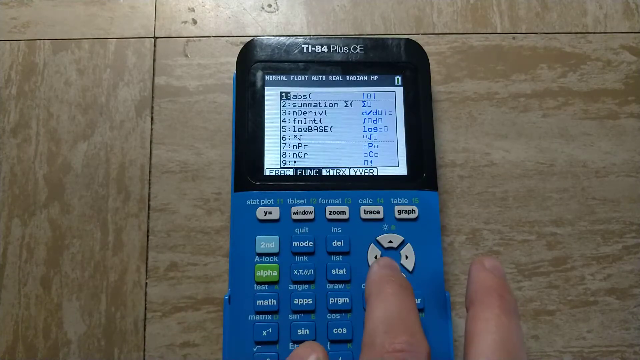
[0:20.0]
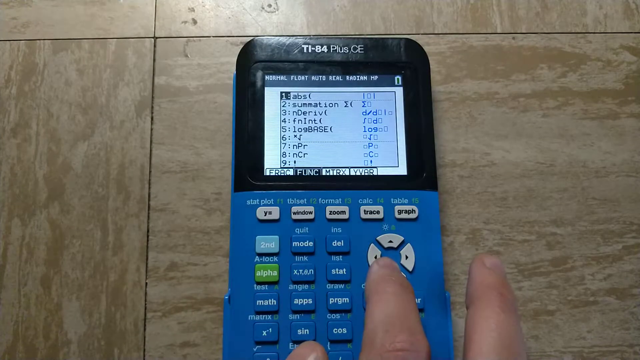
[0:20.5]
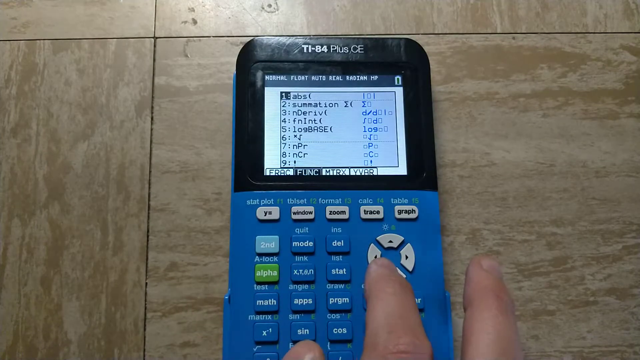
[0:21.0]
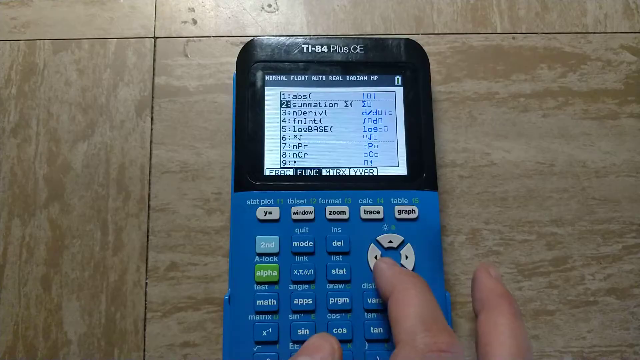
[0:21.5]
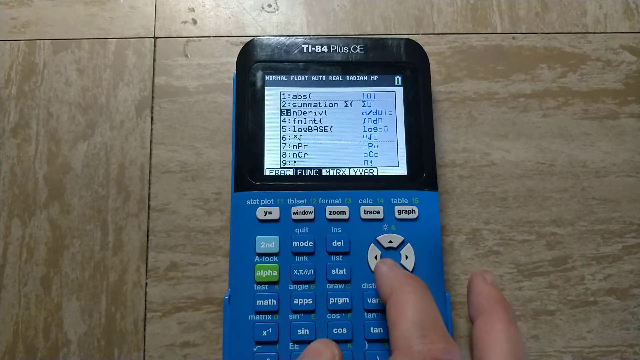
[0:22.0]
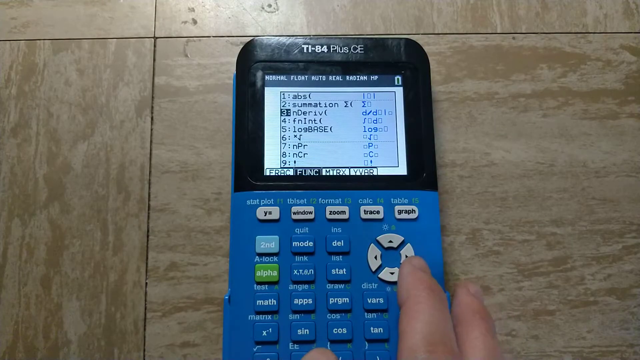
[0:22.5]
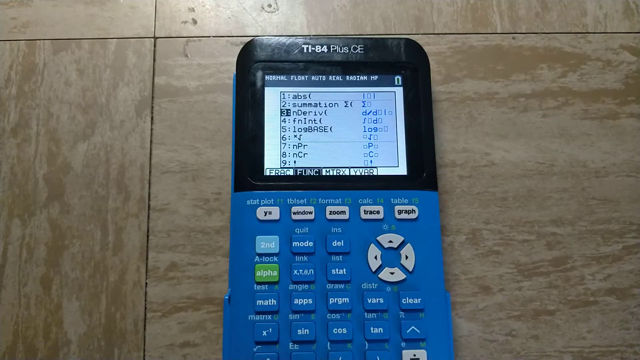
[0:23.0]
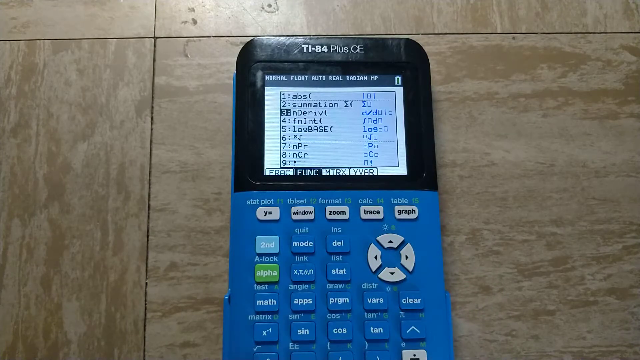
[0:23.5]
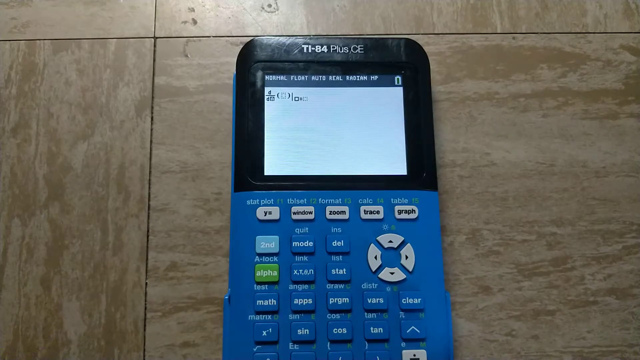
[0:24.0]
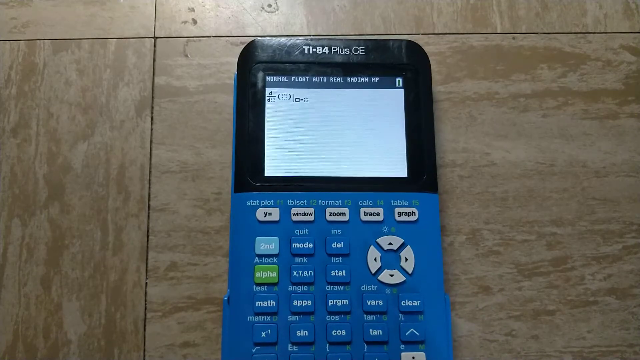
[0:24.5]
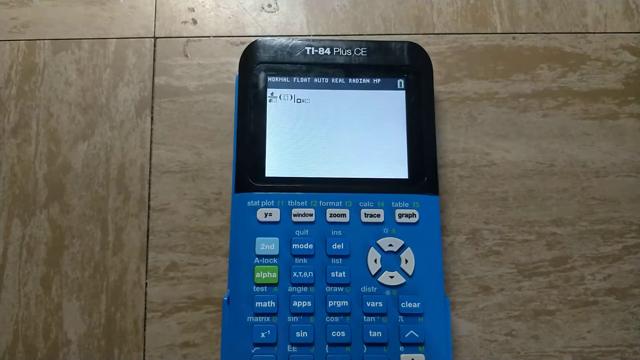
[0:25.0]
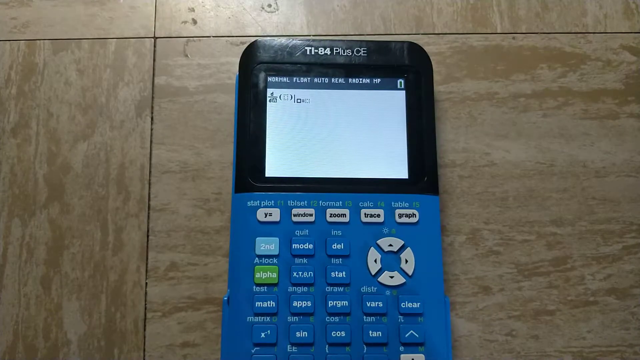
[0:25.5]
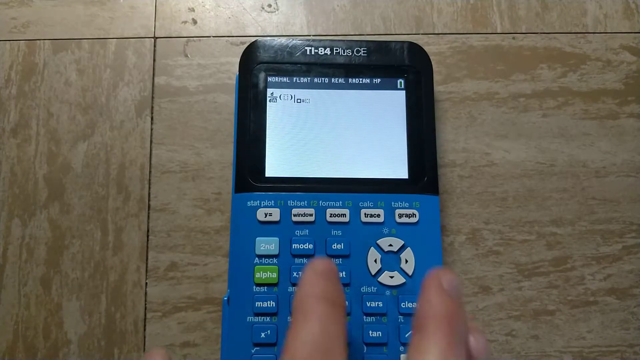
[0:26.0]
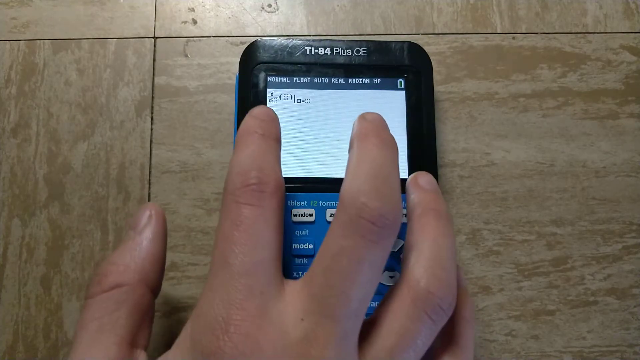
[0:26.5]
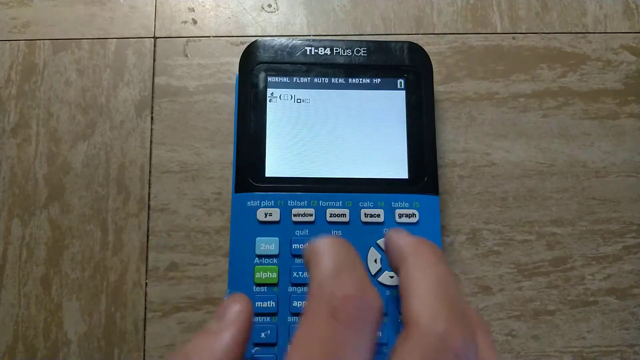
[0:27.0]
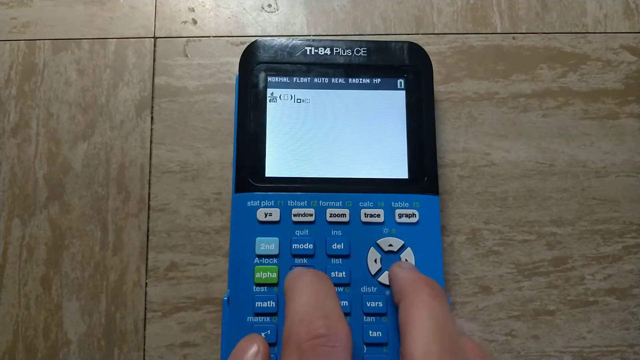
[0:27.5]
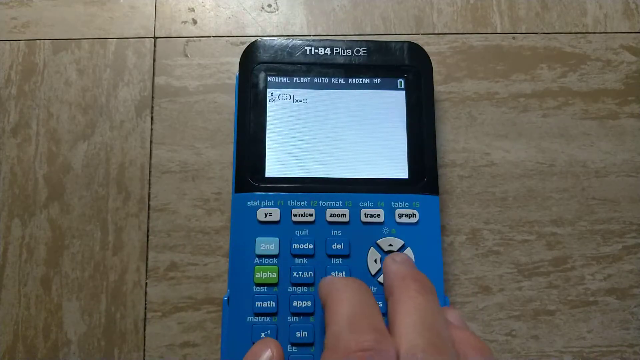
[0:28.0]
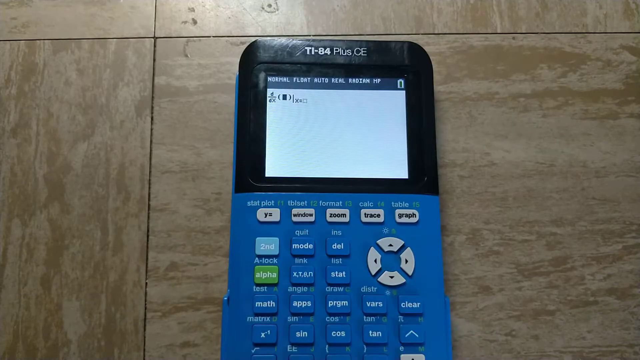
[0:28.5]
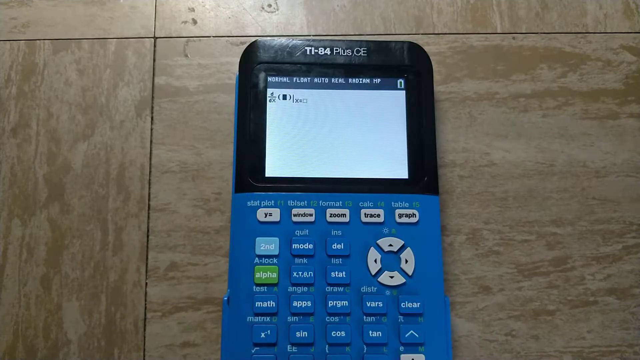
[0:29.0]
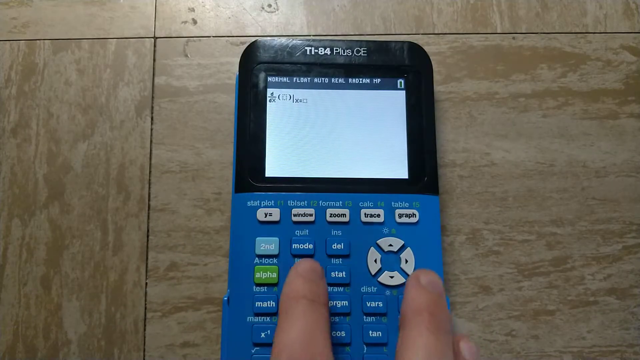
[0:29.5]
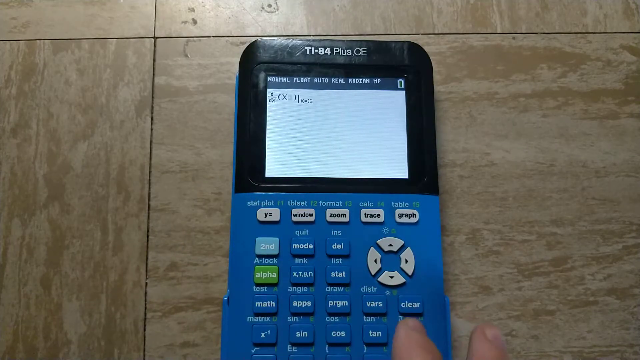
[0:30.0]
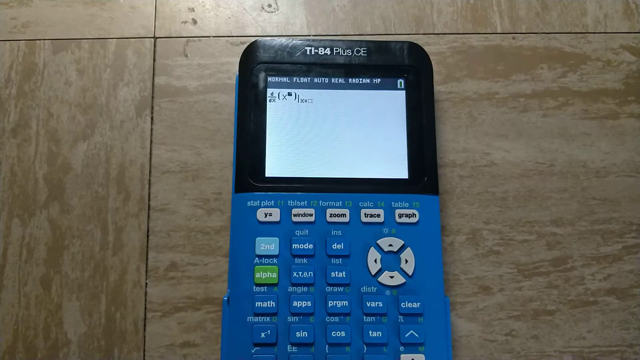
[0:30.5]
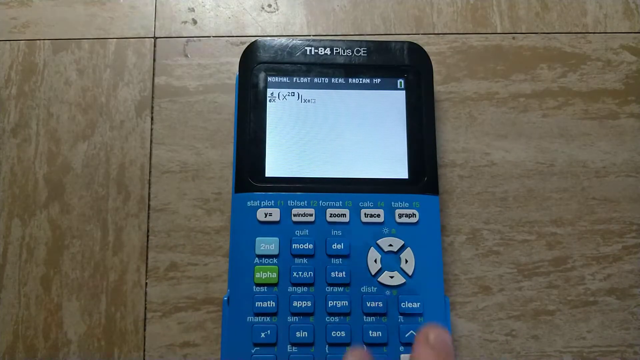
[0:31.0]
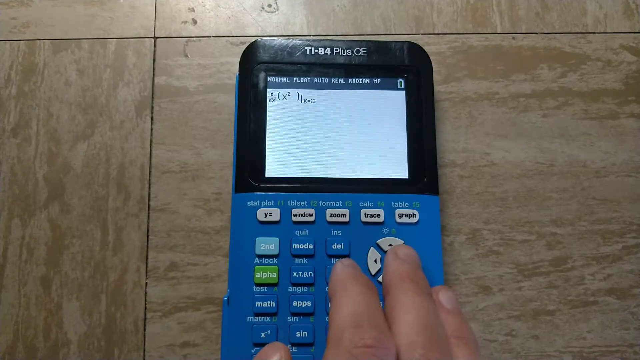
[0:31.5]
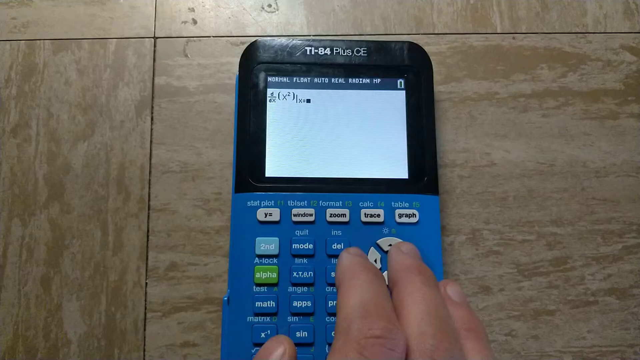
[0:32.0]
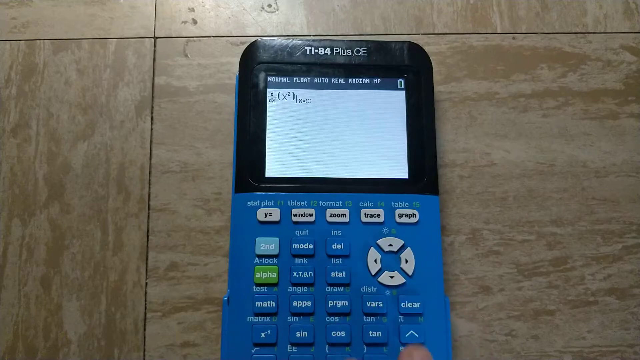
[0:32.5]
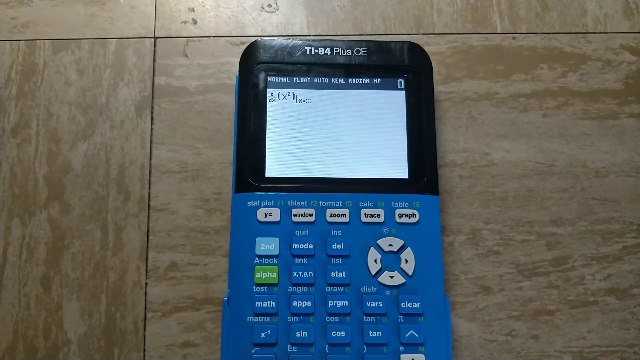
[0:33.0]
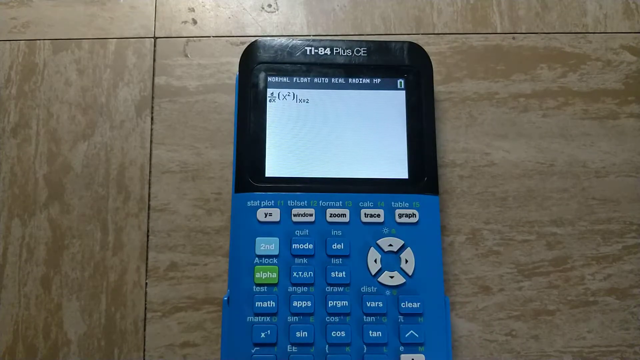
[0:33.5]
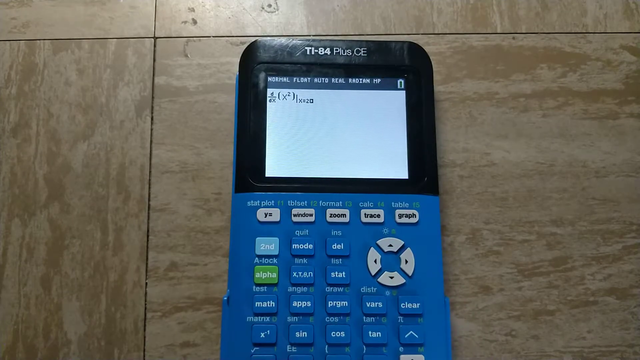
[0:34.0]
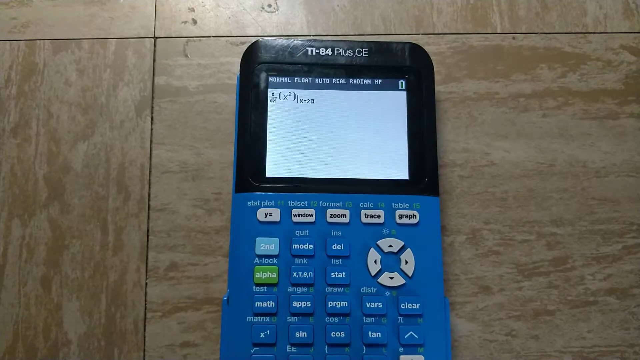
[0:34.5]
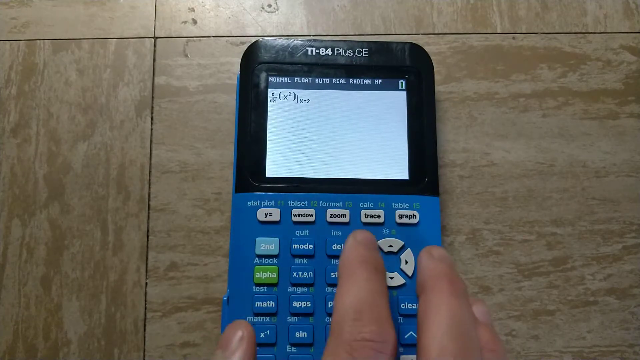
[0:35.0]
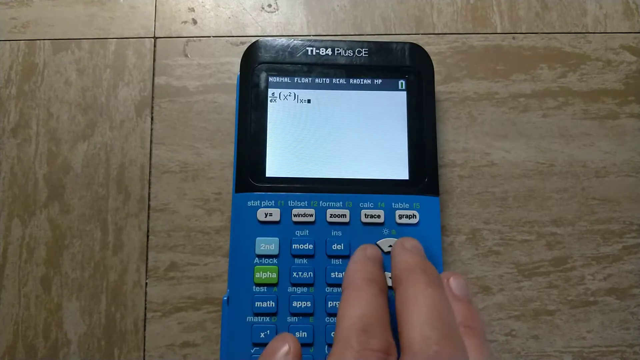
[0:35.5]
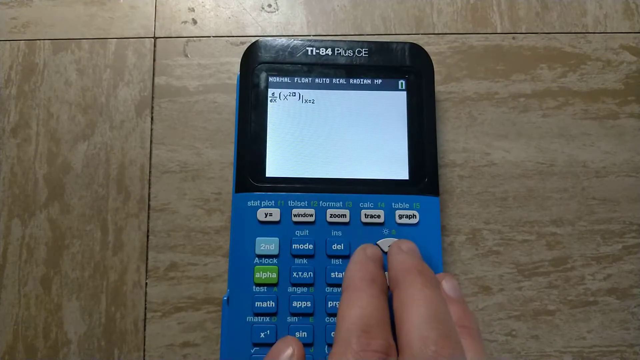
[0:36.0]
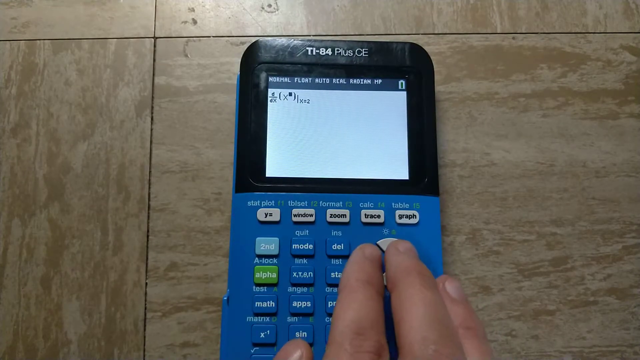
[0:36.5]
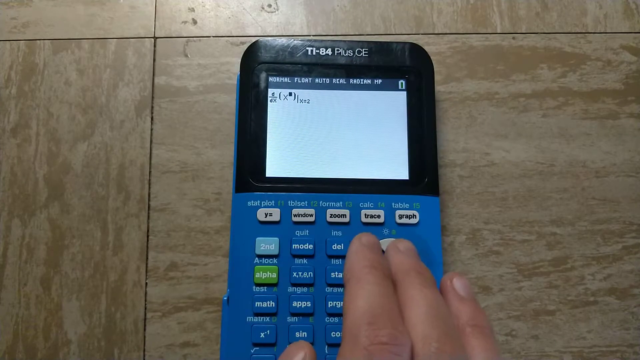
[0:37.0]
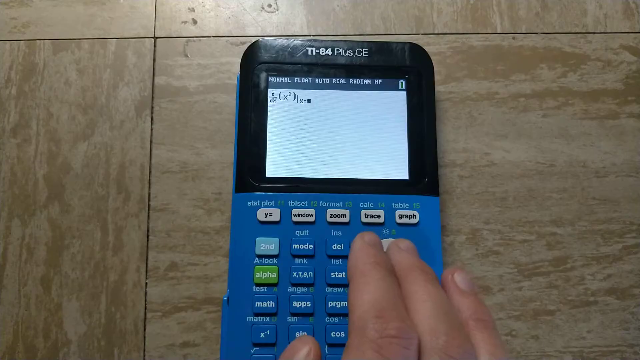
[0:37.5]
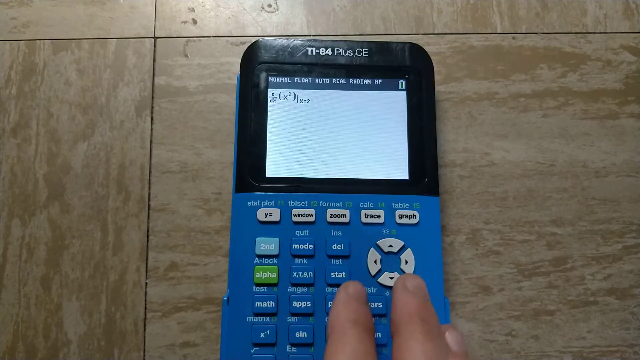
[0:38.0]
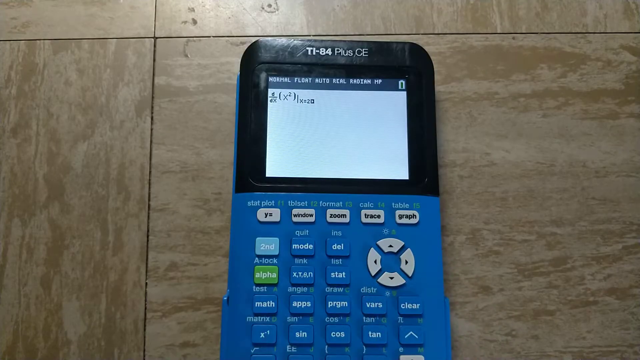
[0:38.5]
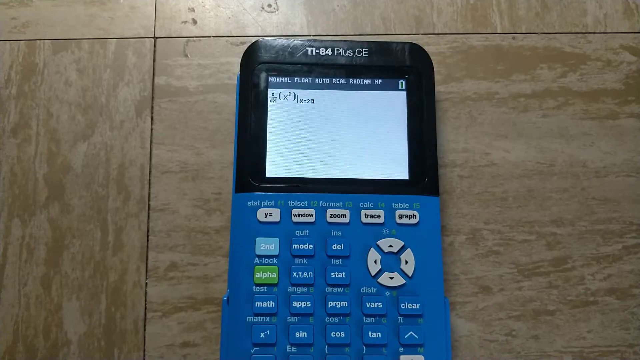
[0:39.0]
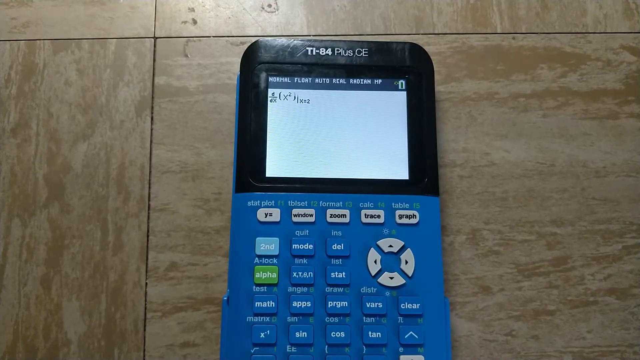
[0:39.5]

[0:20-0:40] A calculator is placed down on the floor, with its screen and all of its buttons visible. It is blue and black, with gray buttons and a green one. All the buttons have labels, and there are also labels written next to the buttons, including names such as "Zoom", "Trace", "Graphic", "Alphabet", "Mode", "Delay", "Start", "App", "Program" and "Meds". Text including a number is written on top of the calculator next to the screen and reads "TI/84 plus IC". A person's hand is busy with the calculator, scrolling with a down button among the many buttons. The symbols and the way things are written make it look like mathematics.